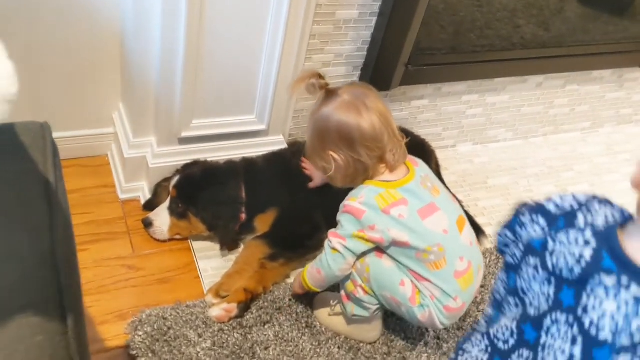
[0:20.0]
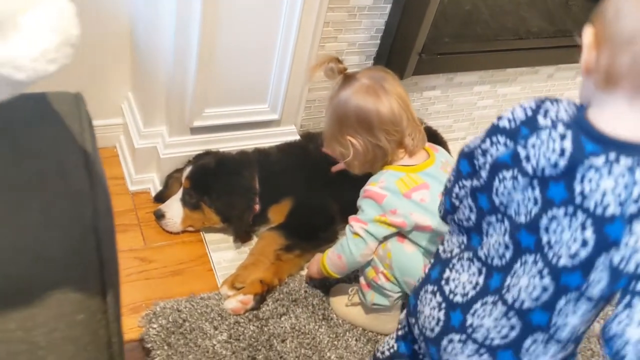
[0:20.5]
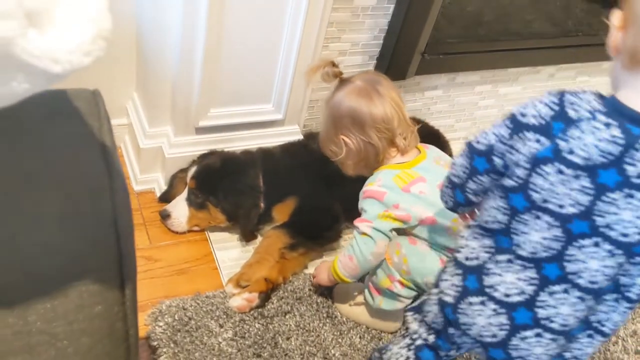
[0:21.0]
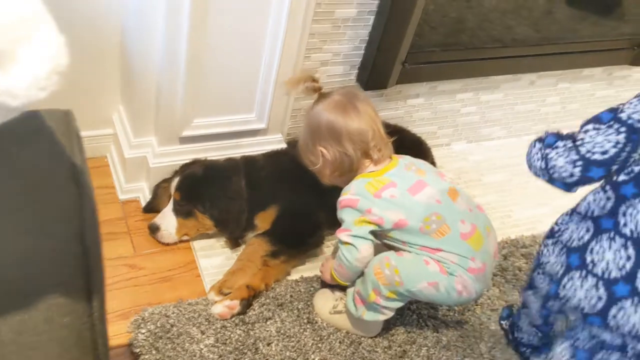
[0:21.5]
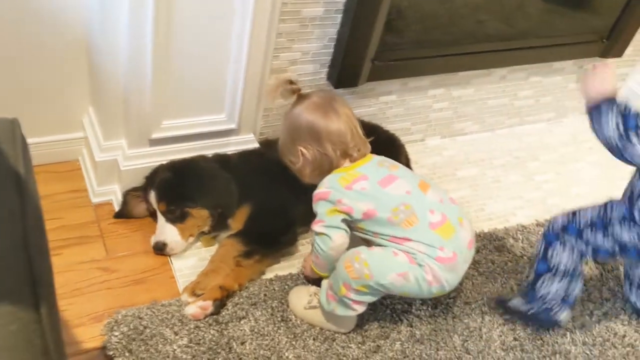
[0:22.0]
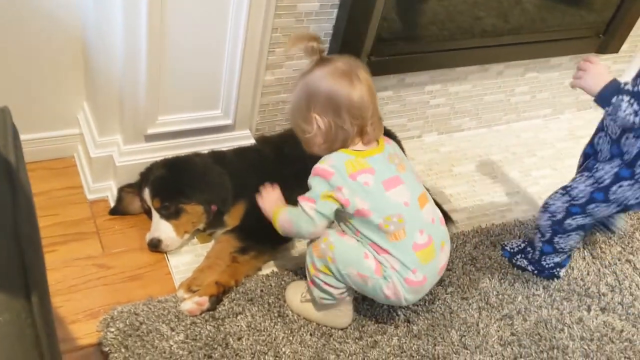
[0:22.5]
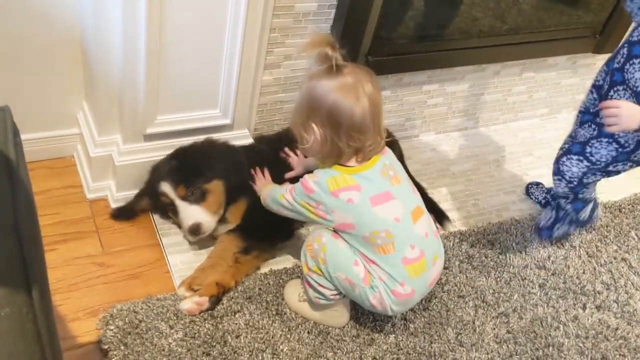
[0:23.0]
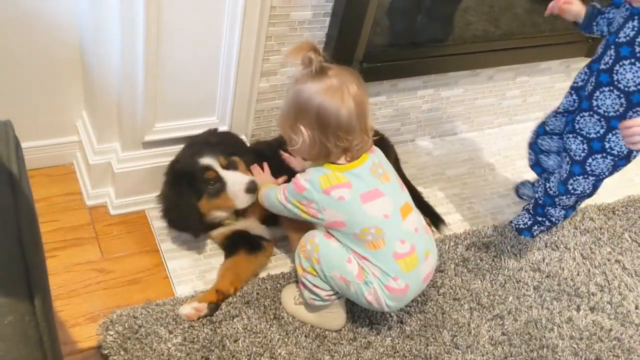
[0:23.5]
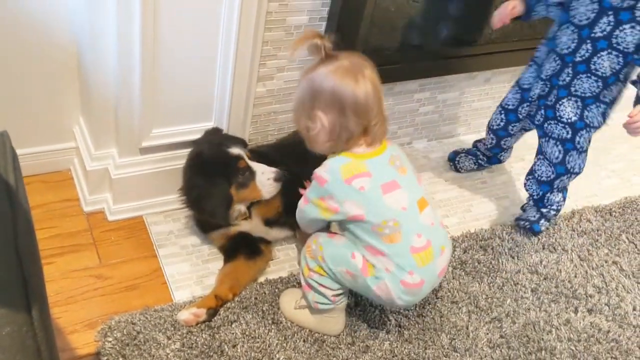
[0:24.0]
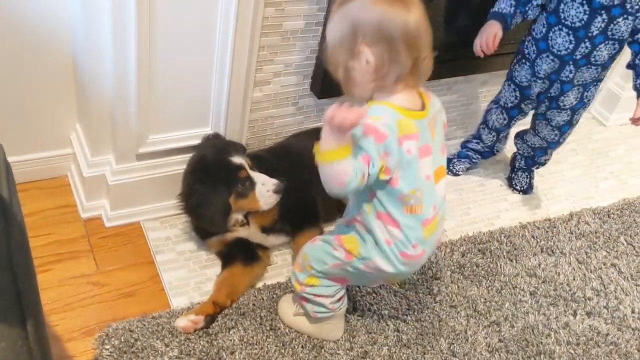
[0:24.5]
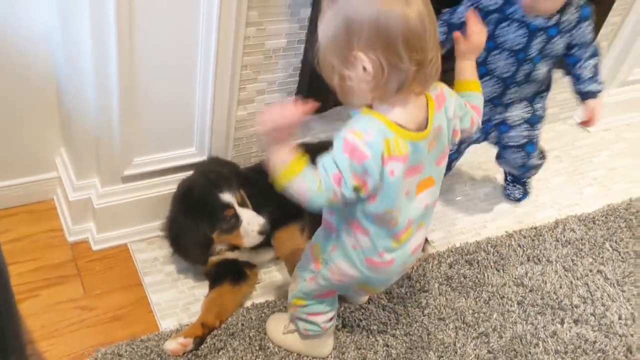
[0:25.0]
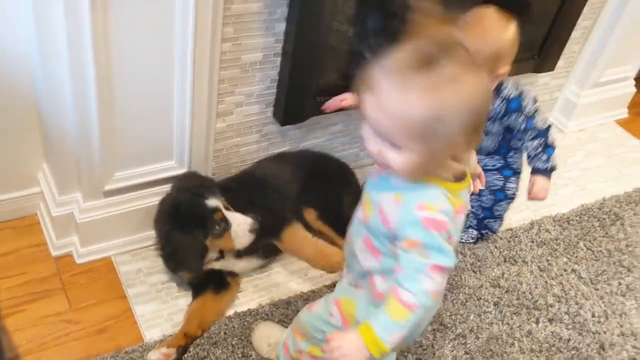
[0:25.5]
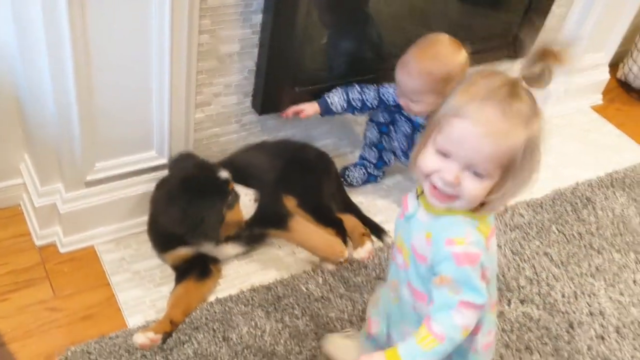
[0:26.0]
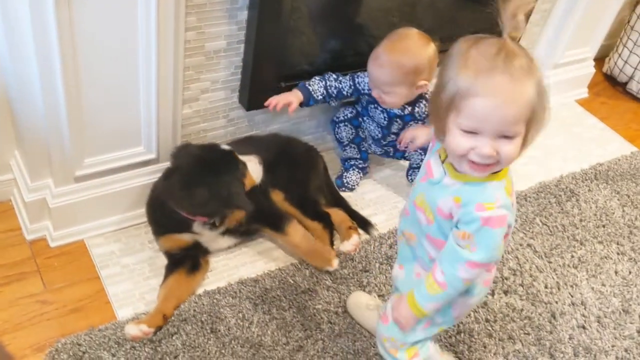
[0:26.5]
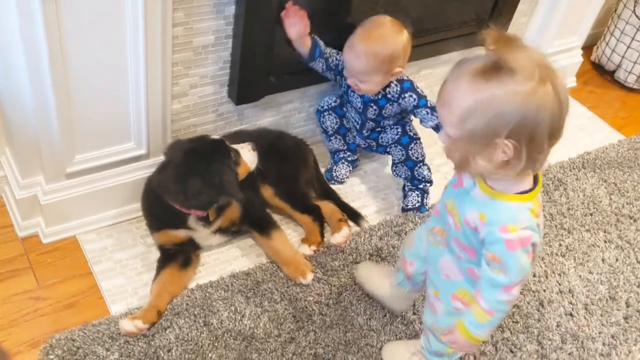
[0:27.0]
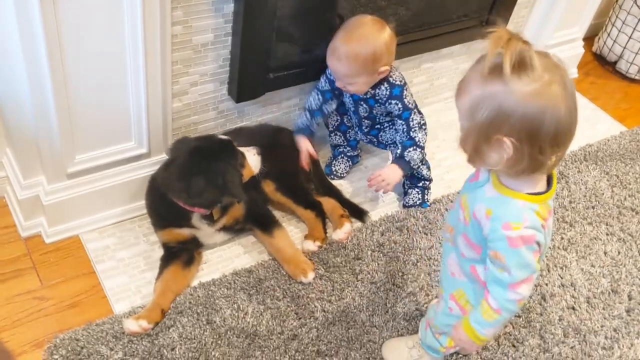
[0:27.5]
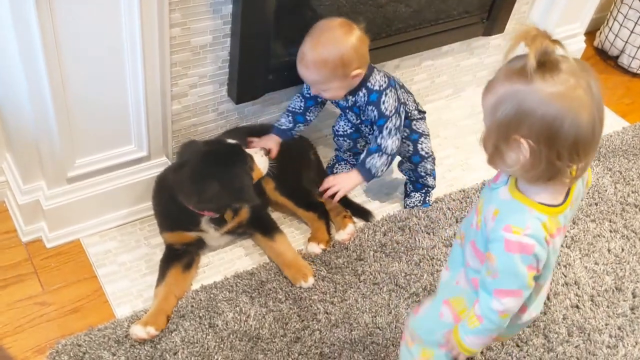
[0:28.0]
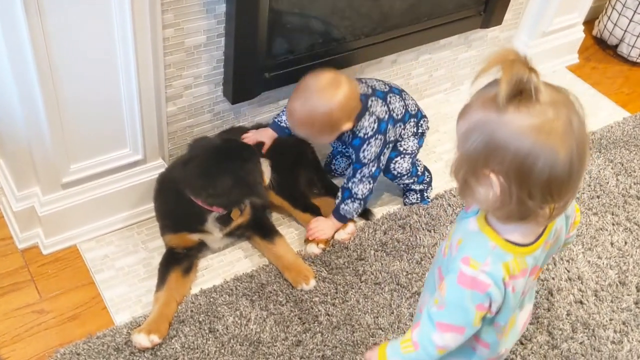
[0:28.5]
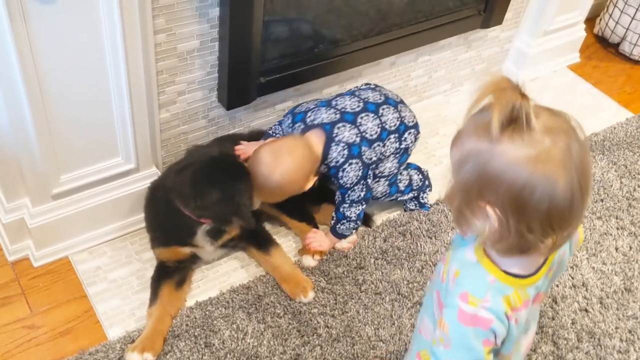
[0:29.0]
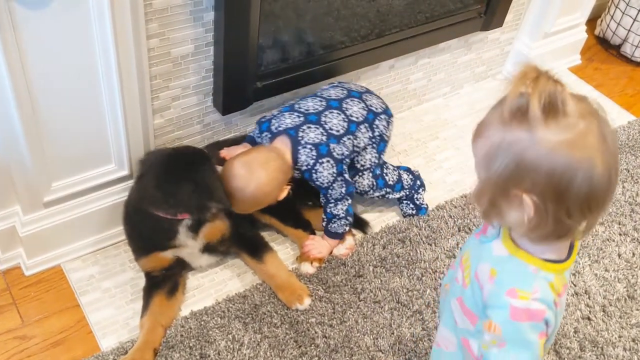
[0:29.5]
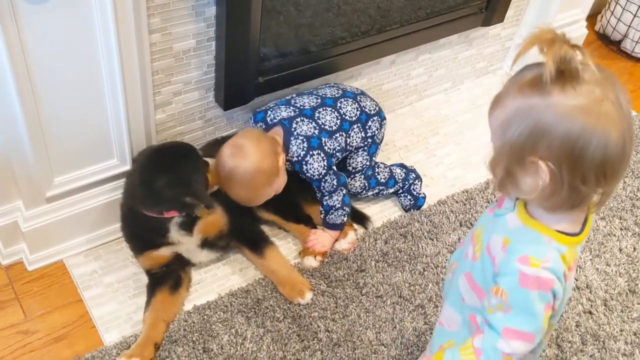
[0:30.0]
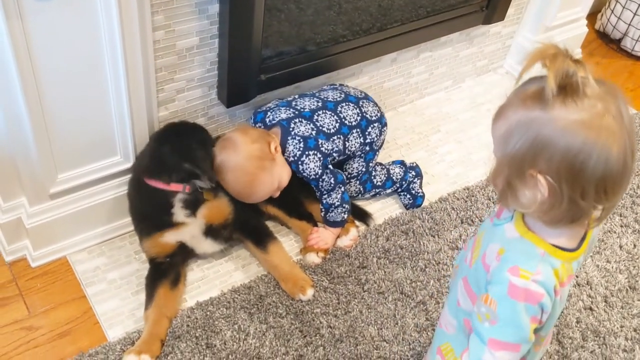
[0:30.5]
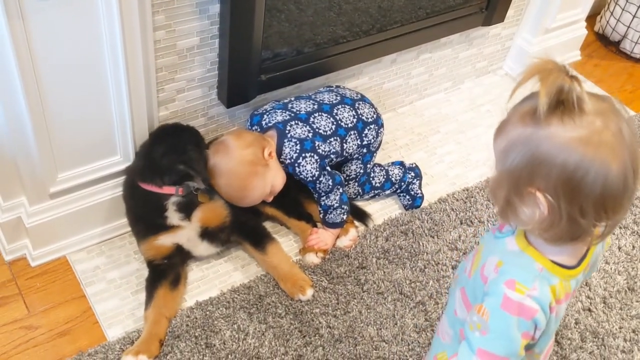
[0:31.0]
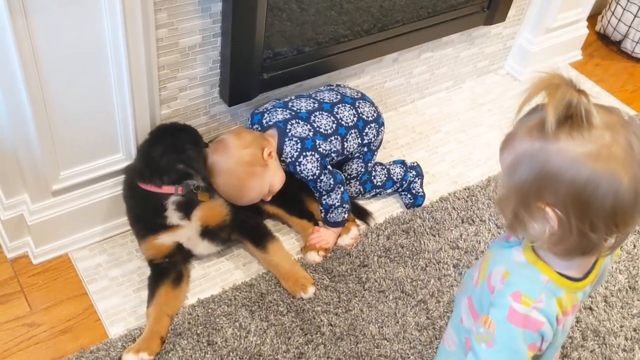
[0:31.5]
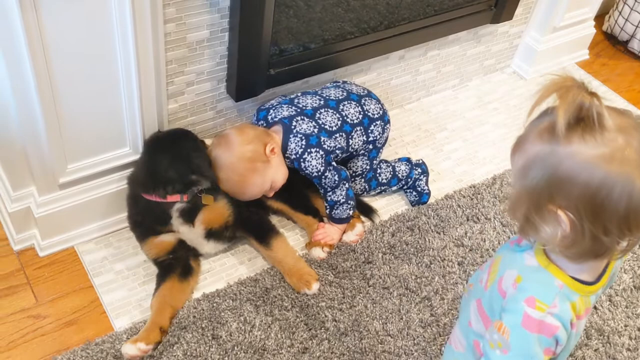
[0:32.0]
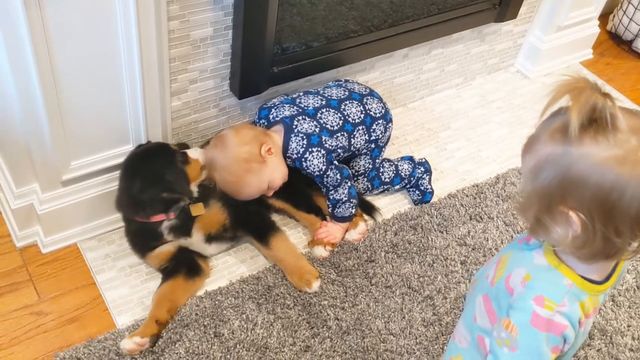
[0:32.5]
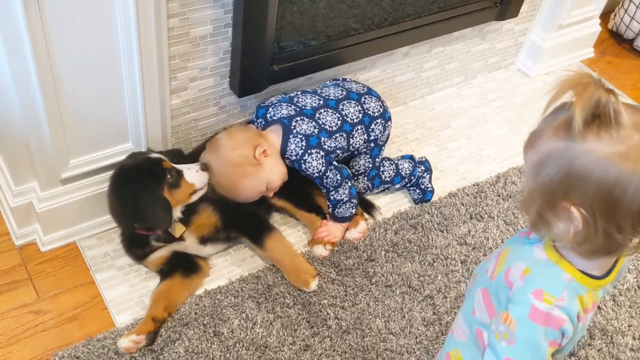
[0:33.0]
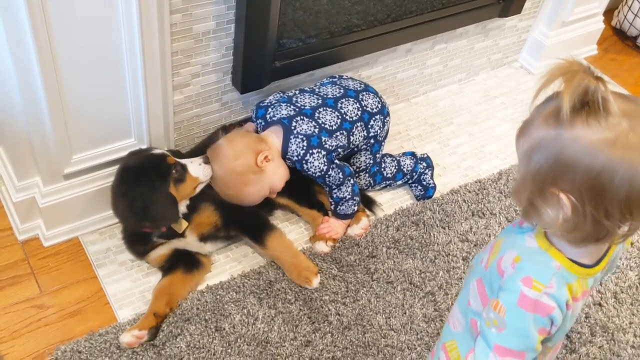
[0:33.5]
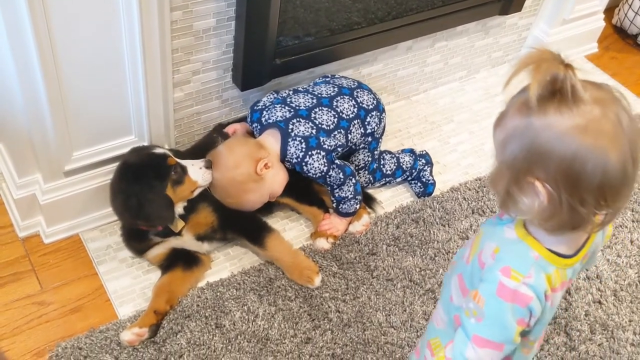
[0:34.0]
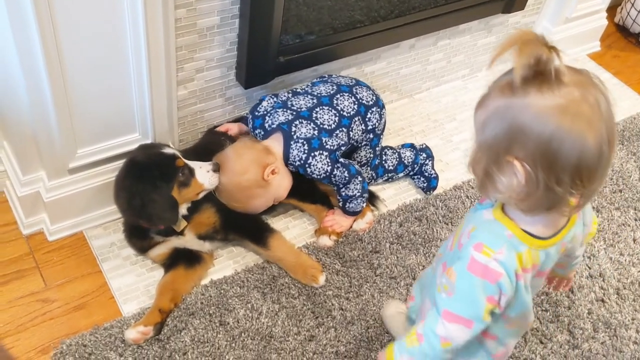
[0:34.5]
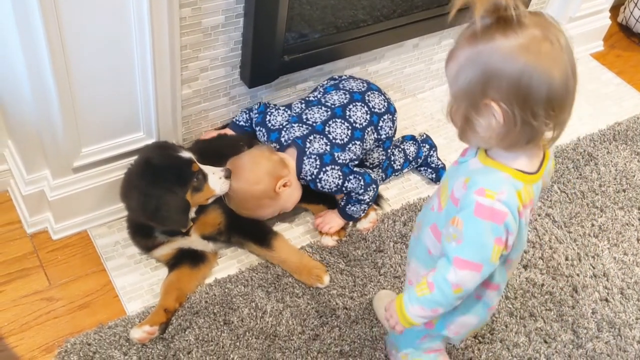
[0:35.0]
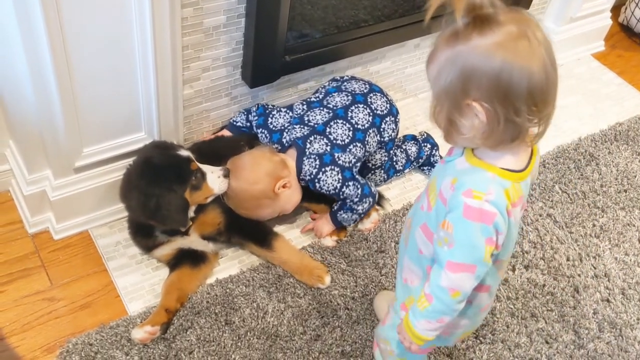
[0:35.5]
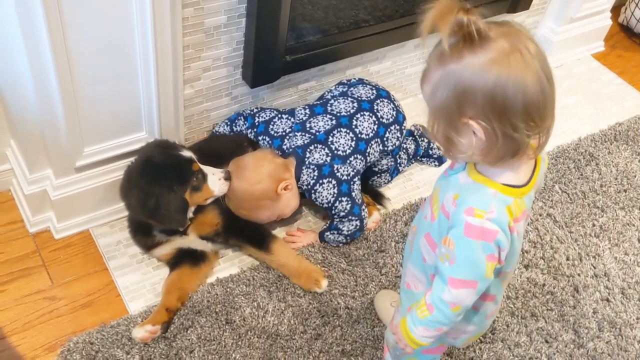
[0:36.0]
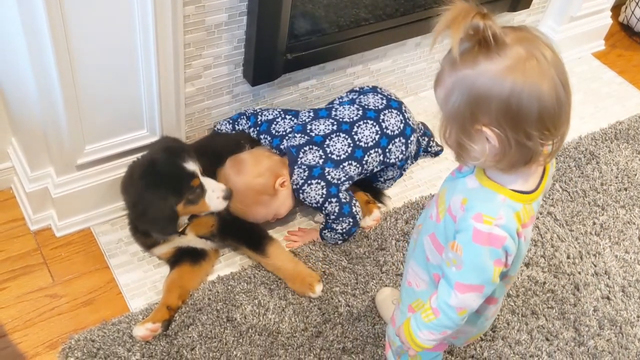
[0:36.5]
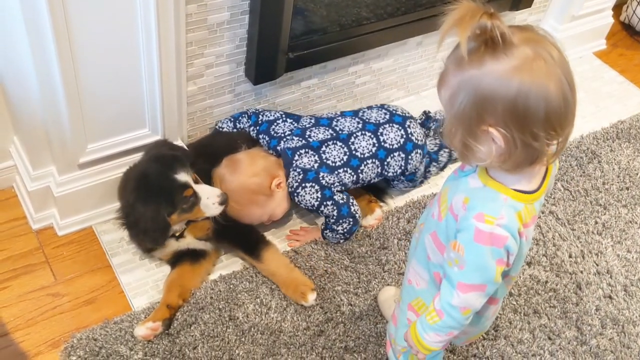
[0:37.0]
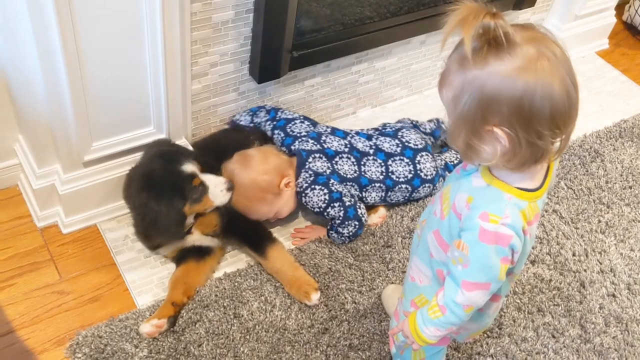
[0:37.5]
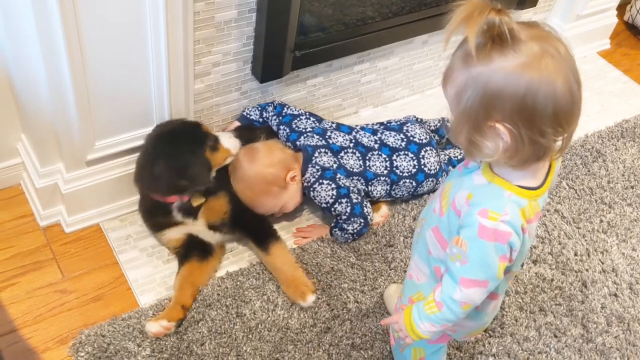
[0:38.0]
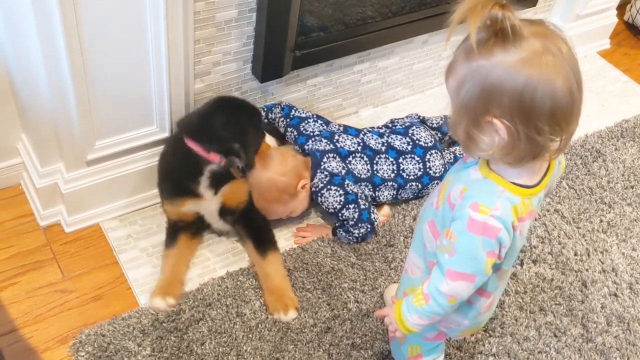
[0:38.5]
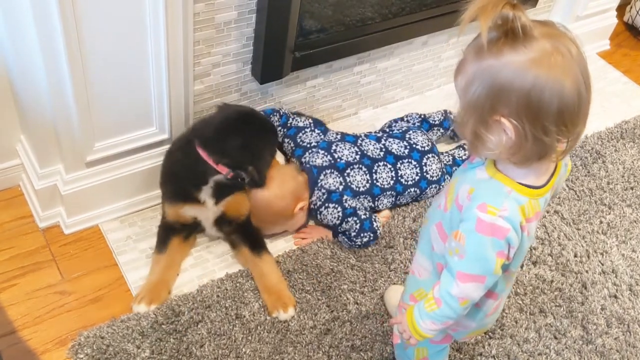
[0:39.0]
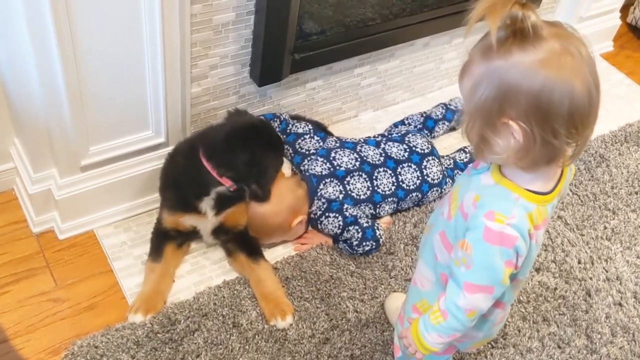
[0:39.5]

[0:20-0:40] In the living room of a house, in front of the fireplace, a black and tan puppy with a white nose is on the wooden floor with a little girl in light blue pyjamas with a yellow pattern. She has blonde hair with a little ponytail and is playing with the puppy, stroking its back. A little boy is also in the room; he moves around and comes into the shot. The little girl stands up and moves away from the puppy, giggling. The little boy is now sitting in front of the fireplace, touching the puppy's back, and he nuzzles his head against the puppy's nose. The puppy sniffs the boy's head, touching it with its nose. The little boy then lies on the floor against the puppy.